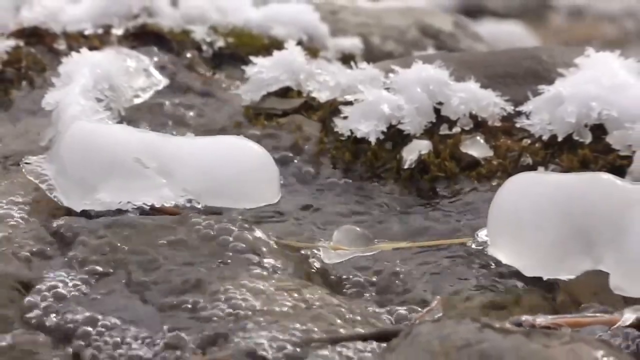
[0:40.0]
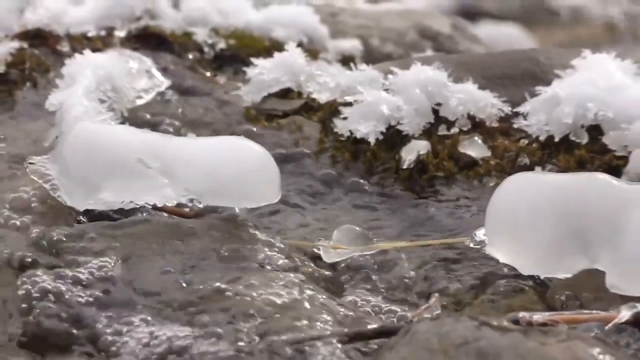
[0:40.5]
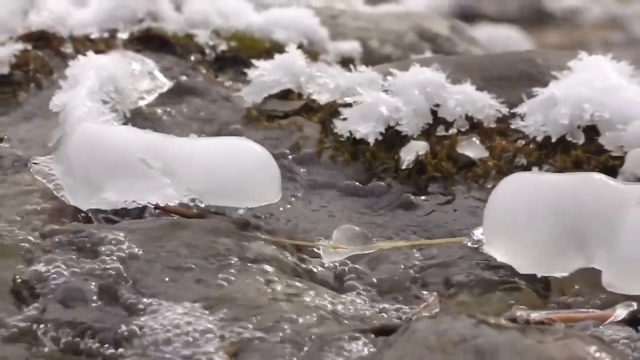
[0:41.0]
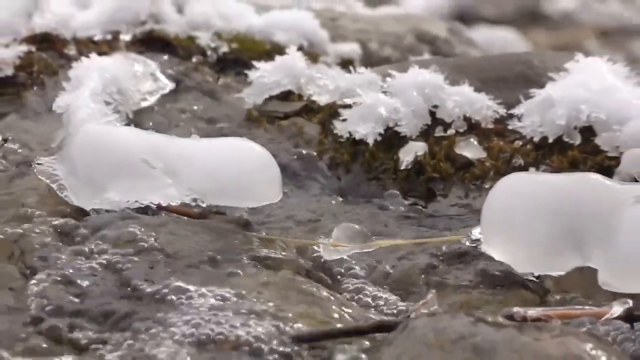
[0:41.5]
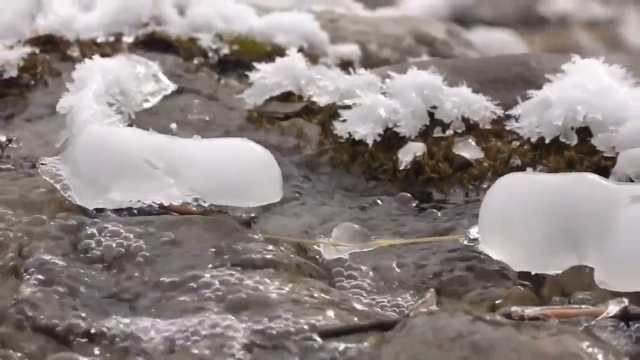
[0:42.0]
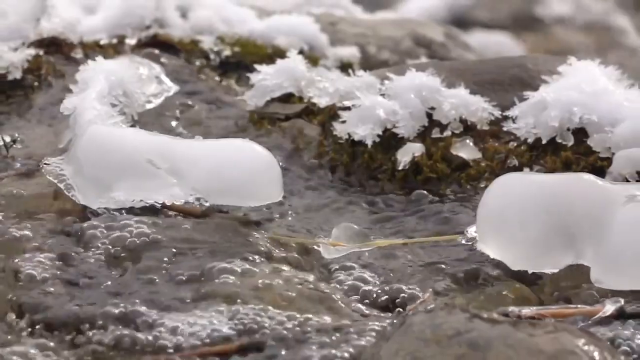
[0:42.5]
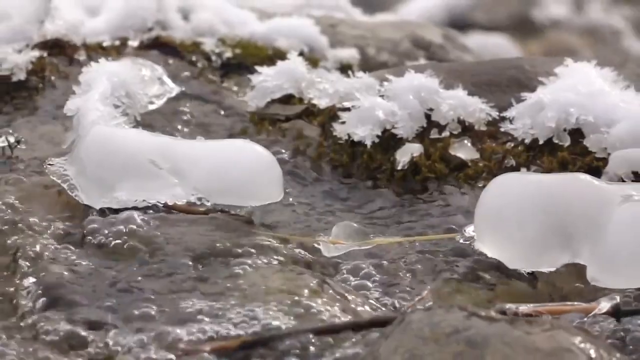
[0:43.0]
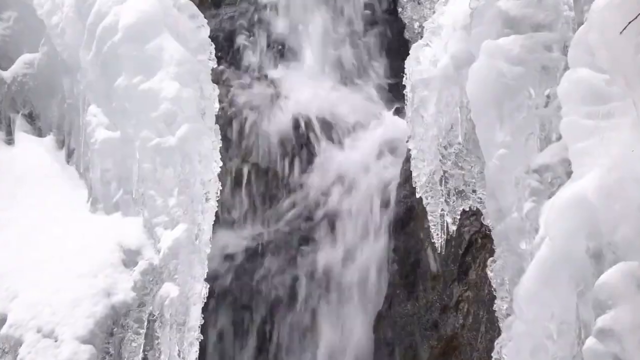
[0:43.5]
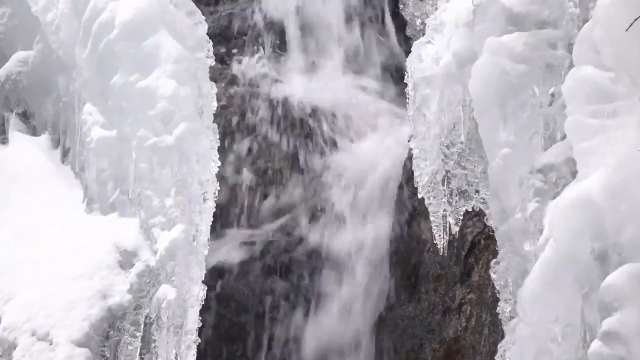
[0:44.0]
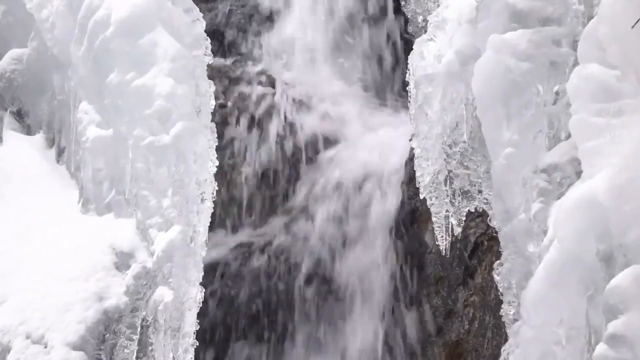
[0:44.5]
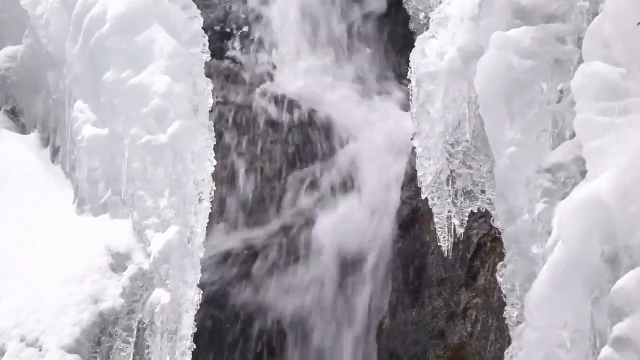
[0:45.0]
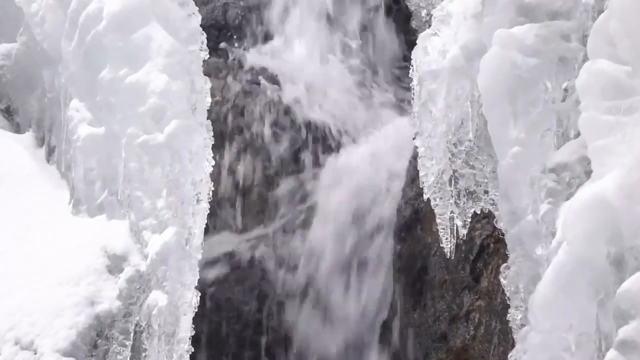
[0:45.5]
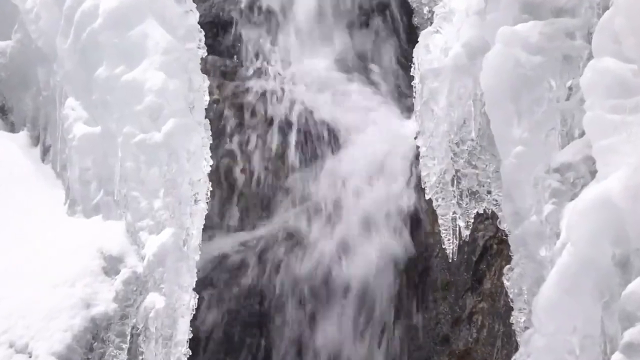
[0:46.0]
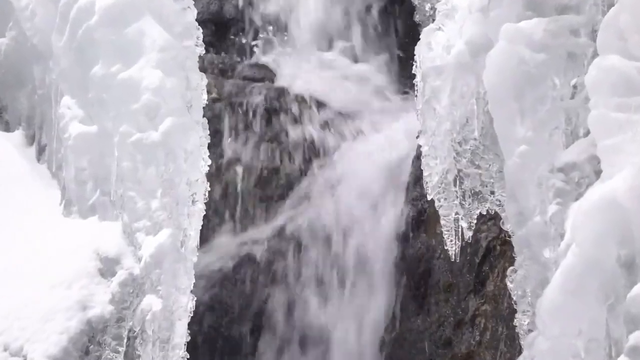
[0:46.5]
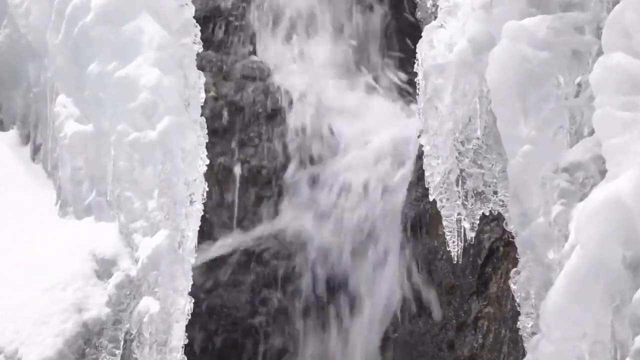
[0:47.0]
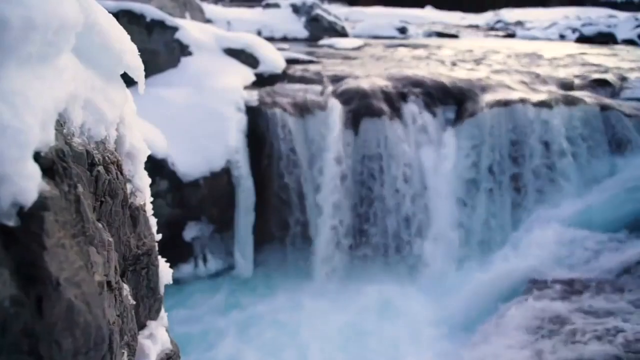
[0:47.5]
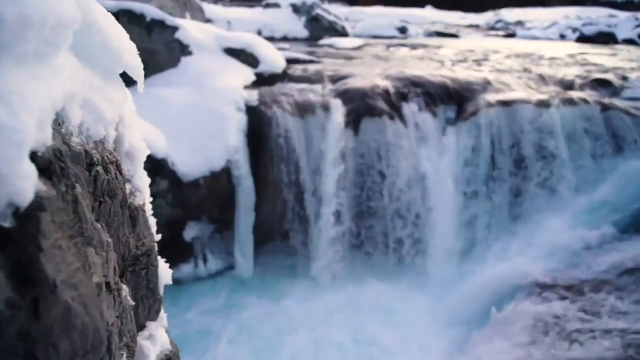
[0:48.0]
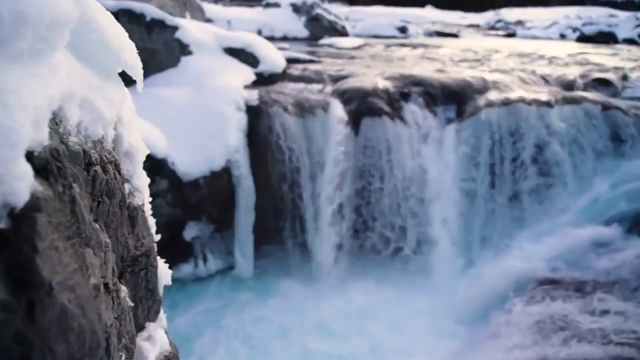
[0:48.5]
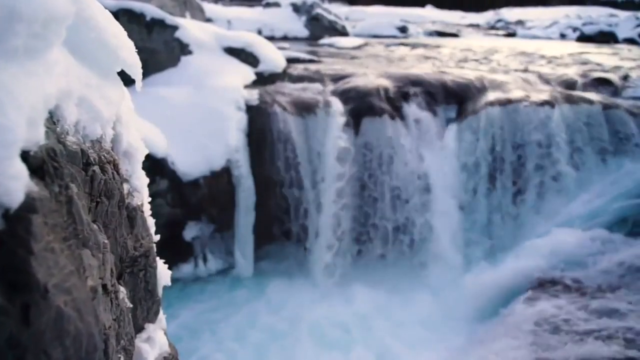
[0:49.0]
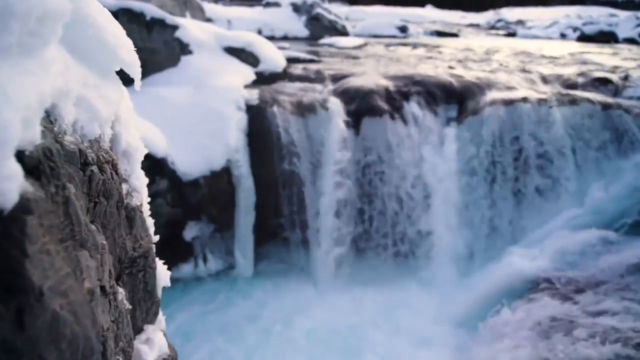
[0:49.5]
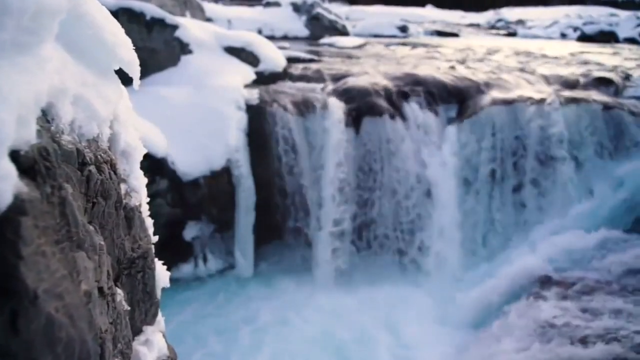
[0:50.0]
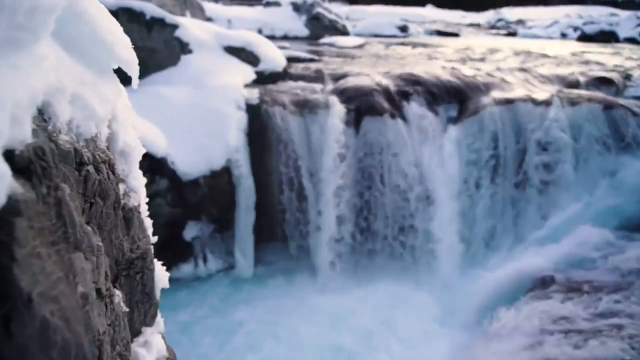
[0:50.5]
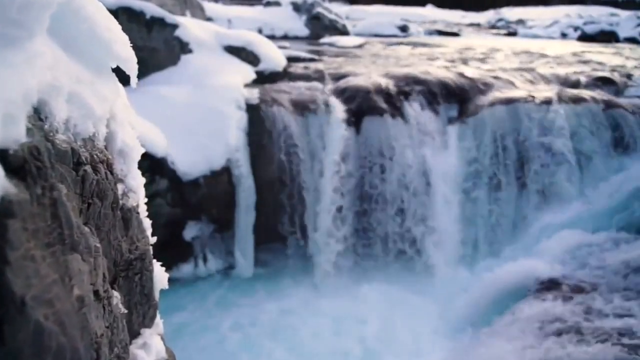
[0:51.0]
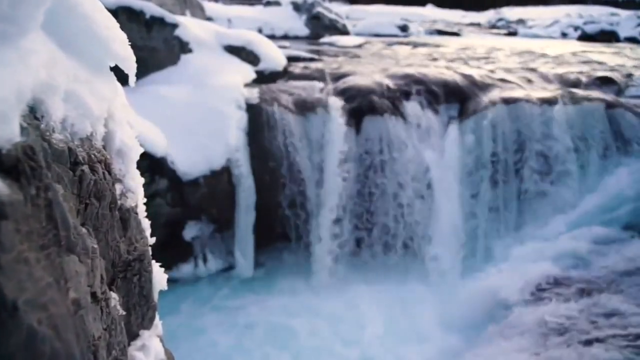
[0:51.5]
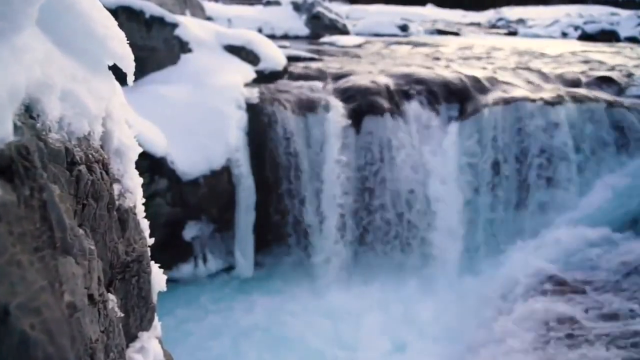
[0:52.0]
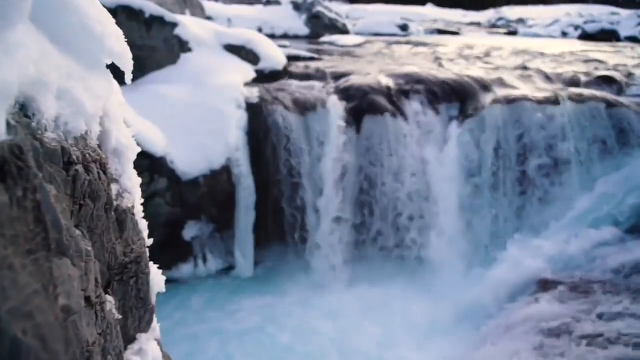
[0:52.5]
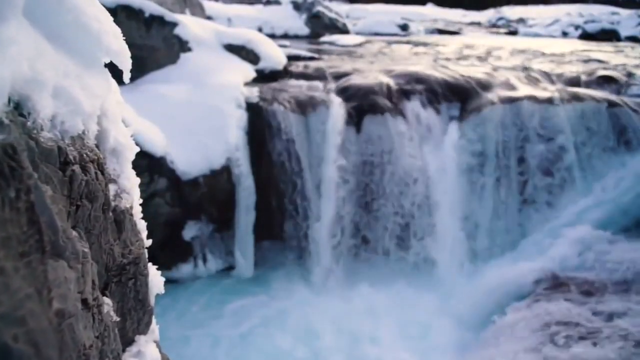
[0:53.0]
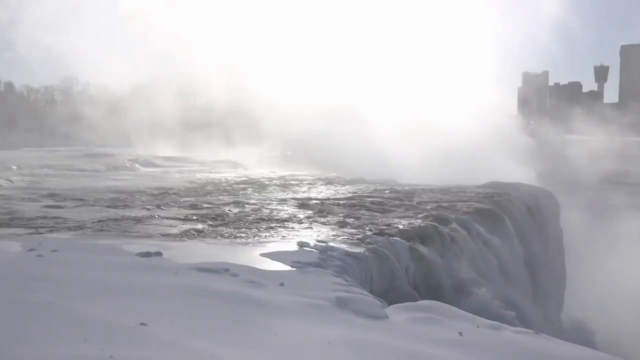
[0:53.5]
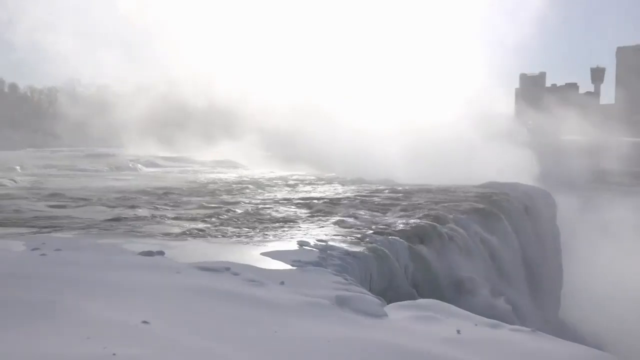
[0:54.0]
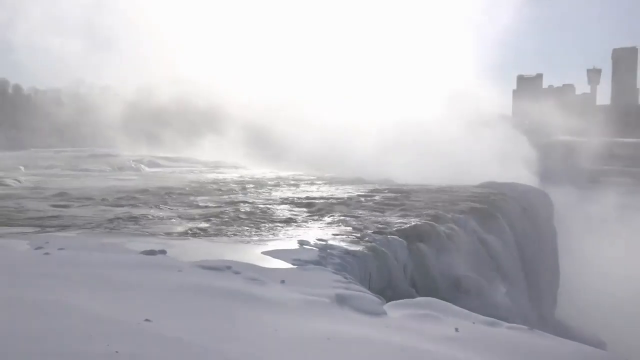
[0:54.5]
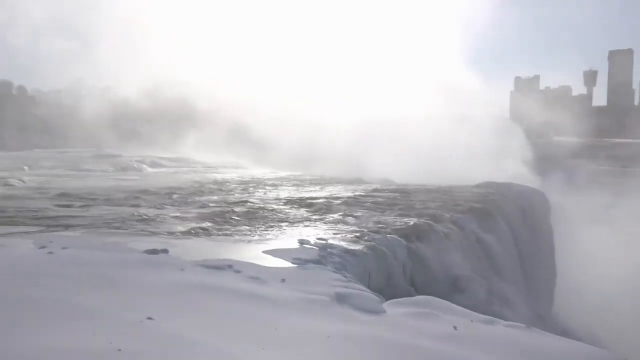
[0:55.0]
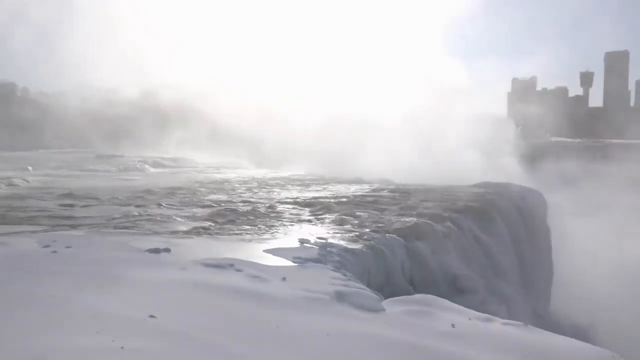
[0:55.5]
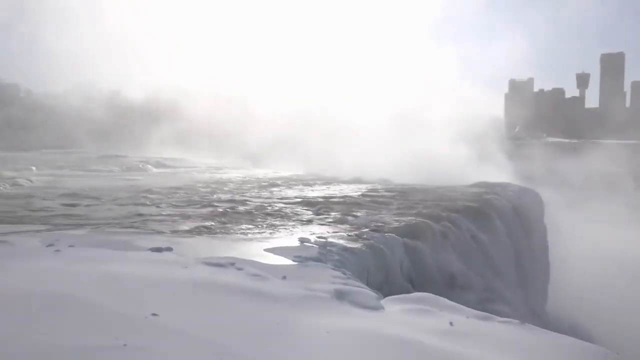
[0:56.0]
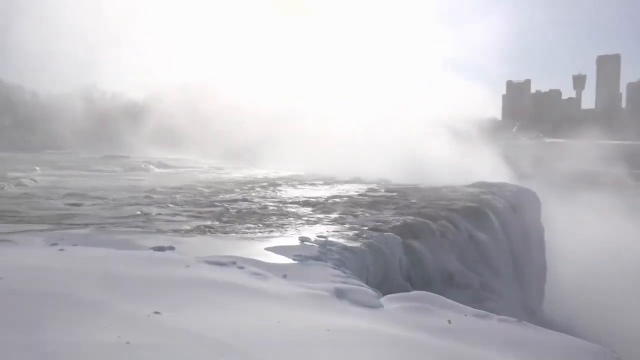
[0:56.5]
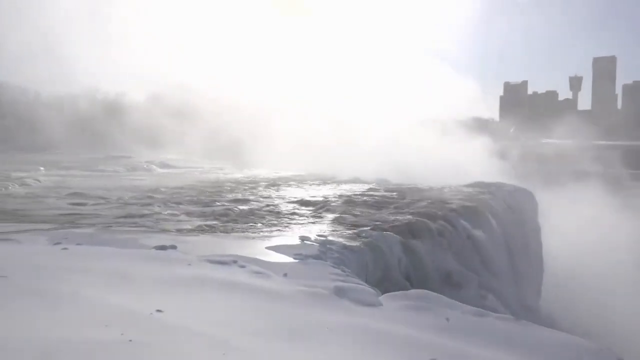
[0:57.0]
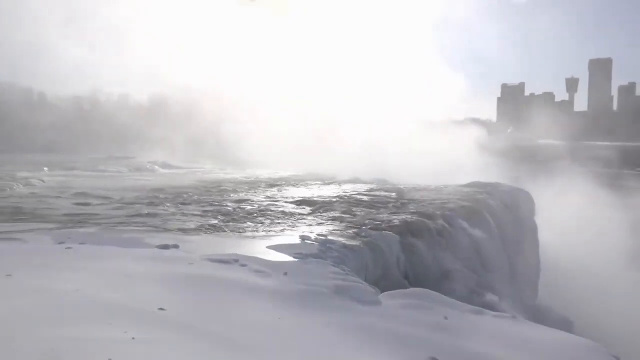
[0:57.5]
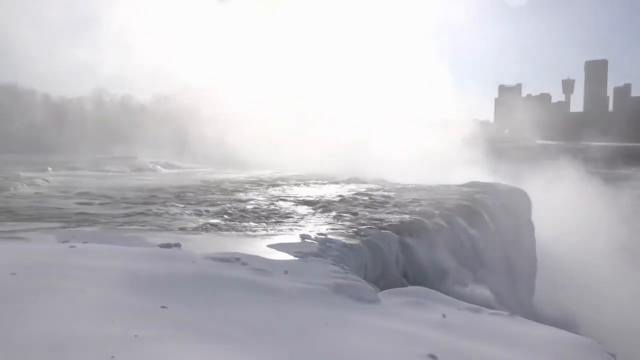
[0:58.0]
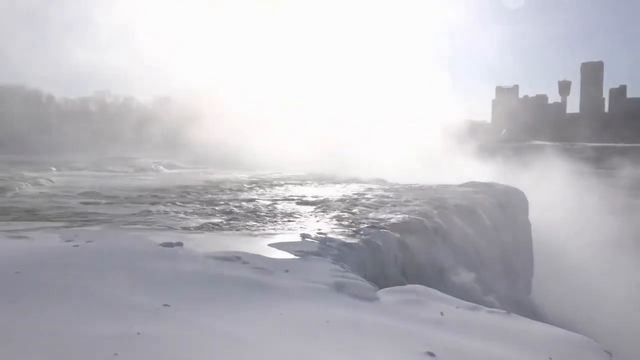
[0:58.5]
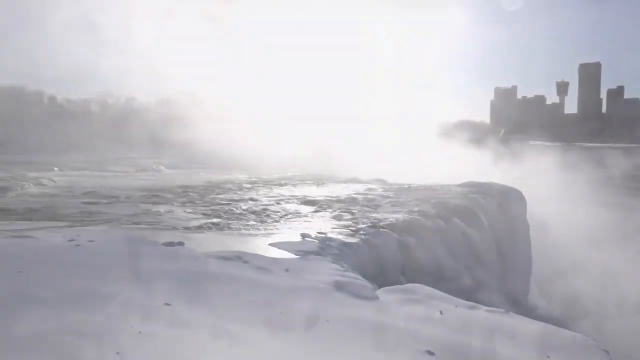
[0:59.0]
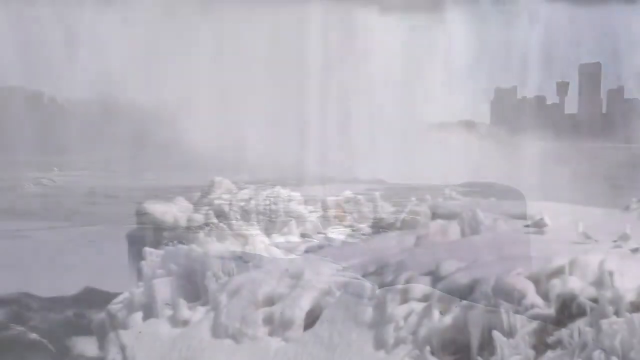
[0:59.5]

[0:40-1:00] A flowing river has water with bubbles, and the water passes through ice that is on top of it. The video then shows a white waterfall, and the rock next to the waterfall is made of ice; the water is pure white and flows rapidly downwards. Next, a huge body of water falls off a rock, forming a blanket waterfall. The top, where the waterfall comes from, is white, apparently from the reflection of the sun, and ice-covered rocks surround this body of water. The video then switches to the end of a waterfall flowing downward; far away from it is what looks like a city with tall buildings. At the edge of this waterfall, a smoky-like mist comes out from the bottom.